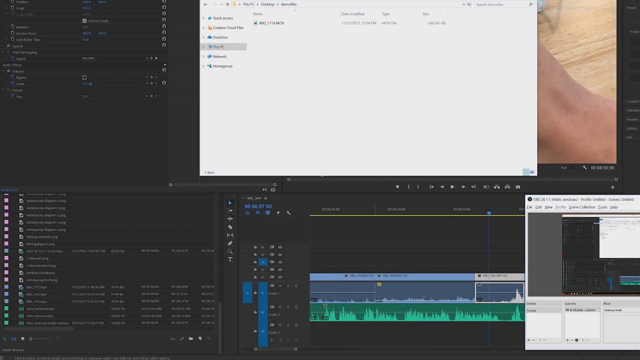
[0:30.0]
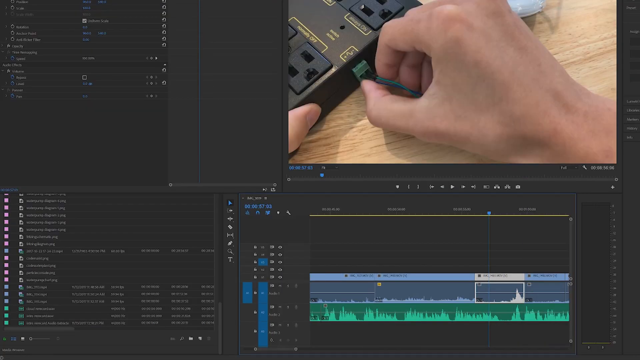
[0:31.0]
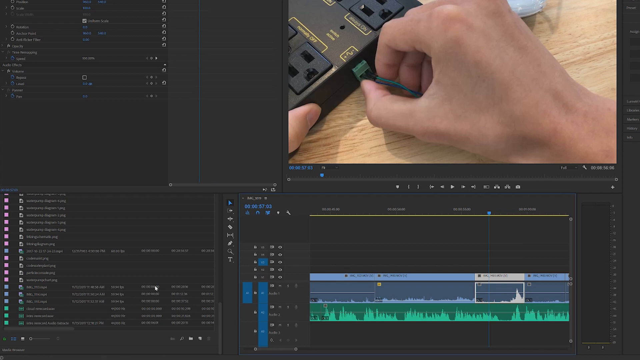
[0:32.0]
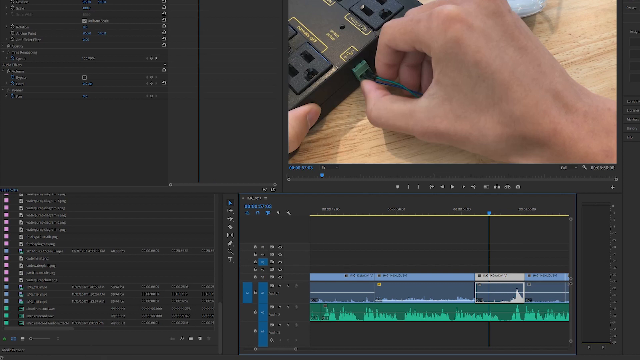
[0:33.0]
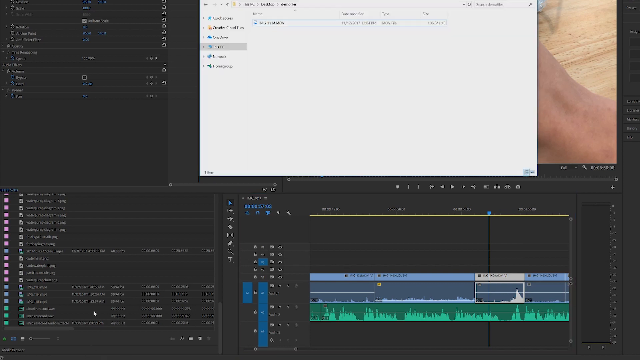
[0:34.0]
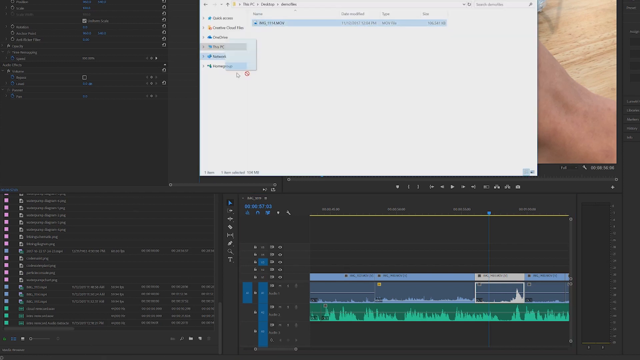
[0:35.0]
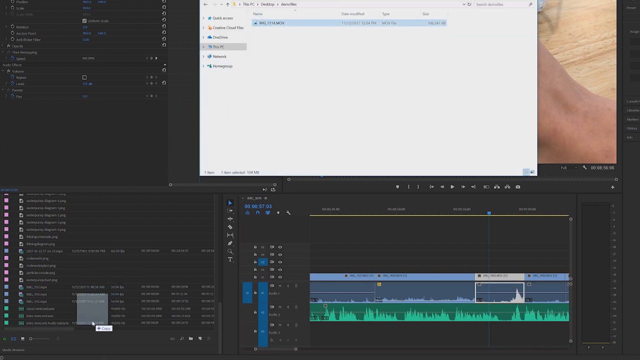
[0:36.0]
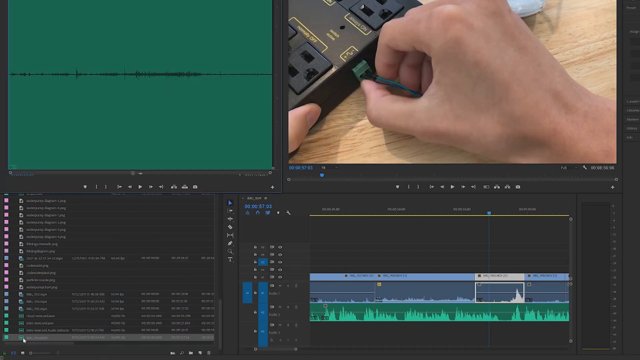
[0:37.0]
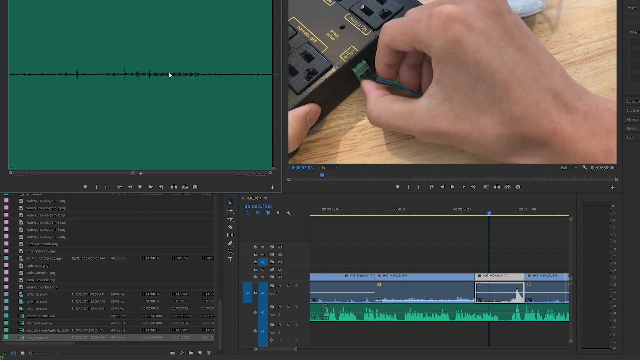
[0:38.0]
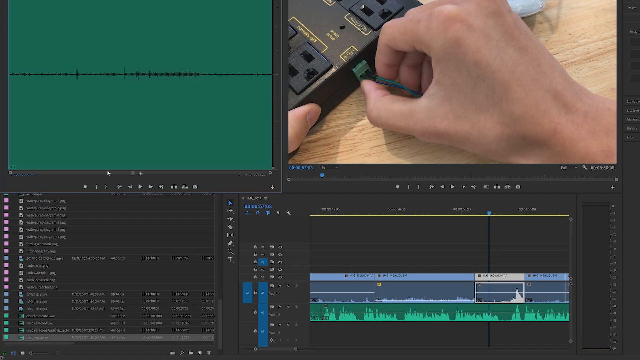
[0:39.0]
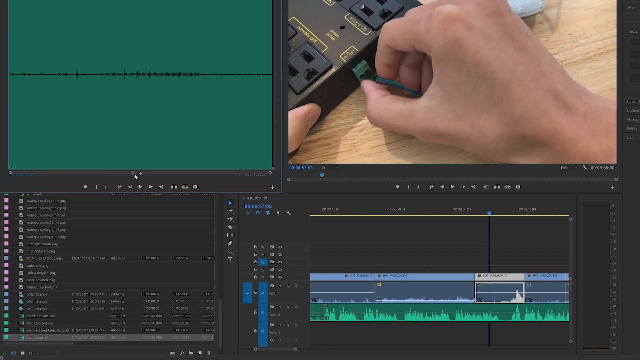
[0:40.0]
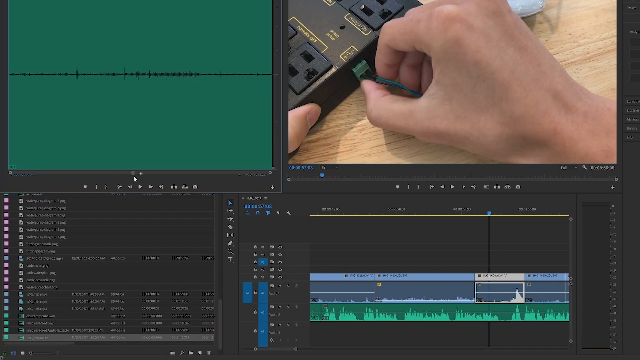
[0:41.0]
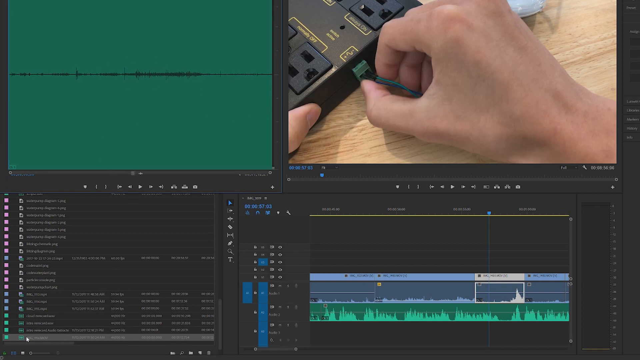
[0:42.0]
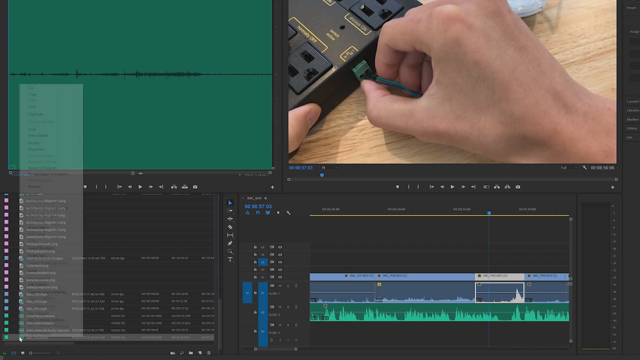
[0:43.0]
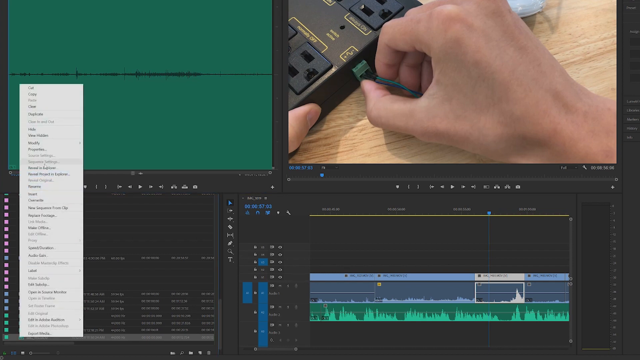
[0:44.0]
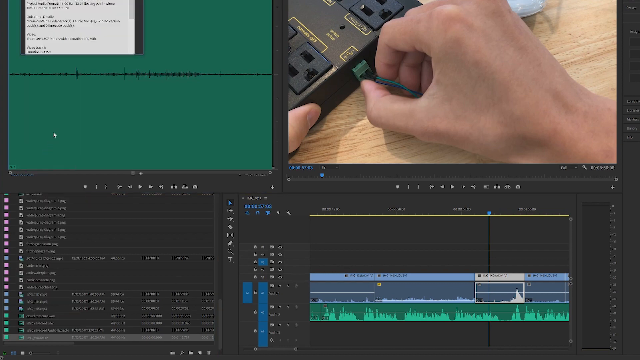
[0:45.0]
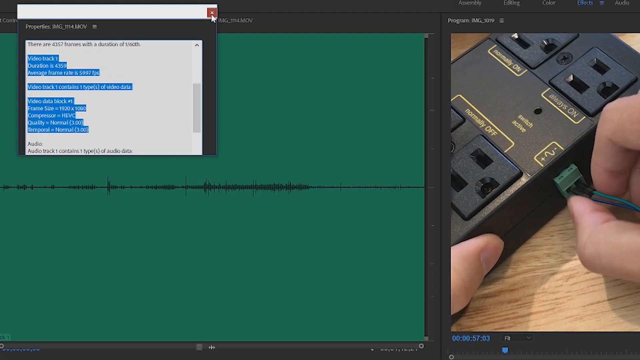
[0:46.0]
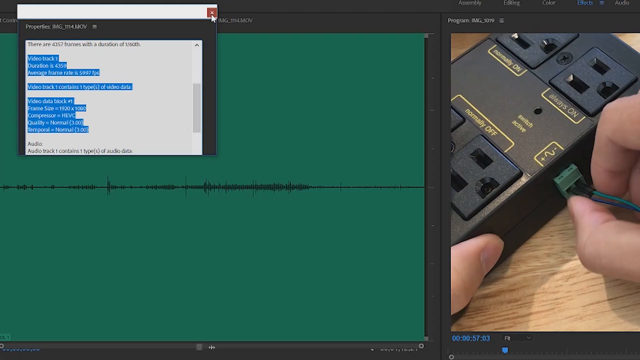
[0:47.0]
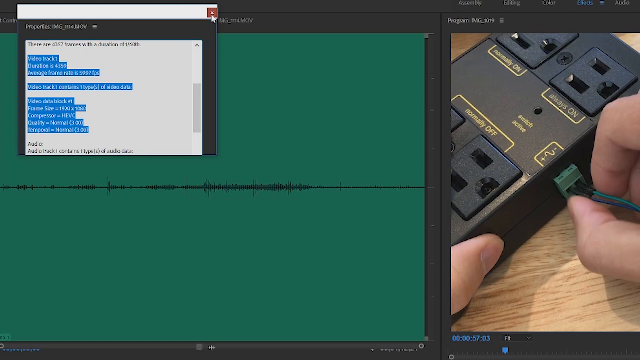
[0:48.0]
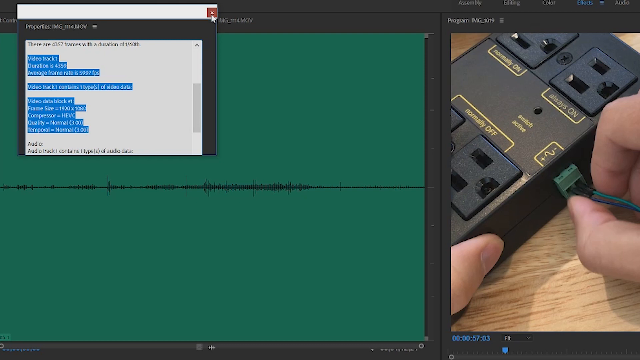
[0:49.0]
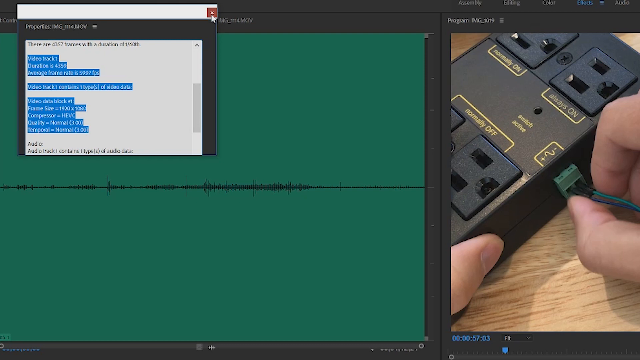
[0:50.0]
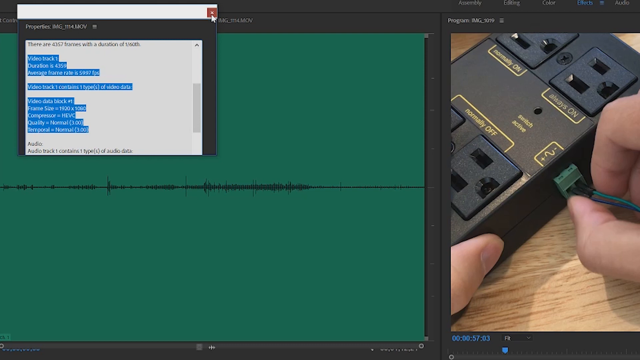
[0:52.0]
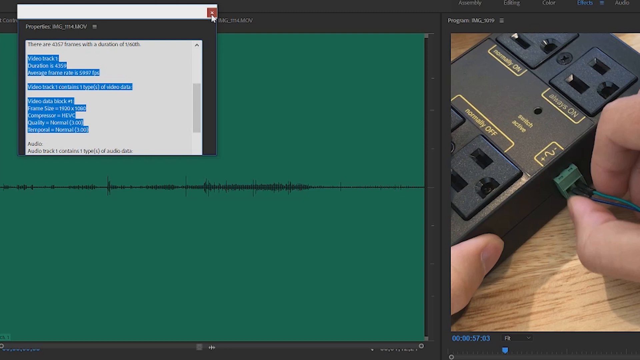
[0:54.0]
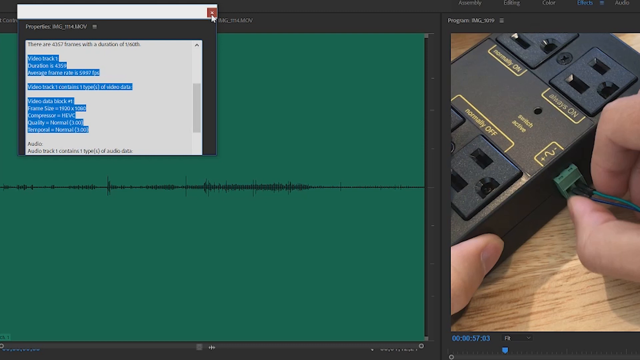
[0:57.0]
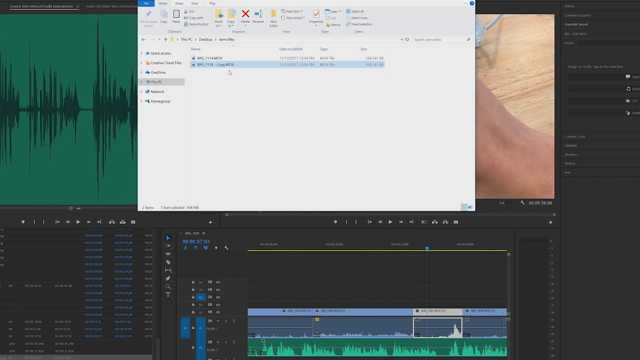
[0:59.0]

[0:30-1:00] The cursor picks some data from one side and puts it in the lower part of the screen, then picks another piece of data from the lower part and places it on the green side of the screen. The white hand is still there, not moving, trying to fix the green cable, but the picture is now closer. A file is now opened directly on top of the white person's hand; the person is apparently looking for data to transfer or move elsewhere. The green portion that took up one third of the screen is no longer there, and everything is now black and dark, with the white hand still there, static and without motion. The cursor moves faster, picks one piece of data straight down to the lower part of the screen, and then the data is transferred back to the green area, highlighted in blue, while the white hand stays still.